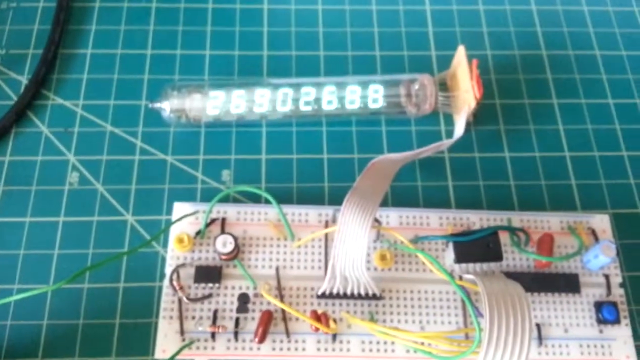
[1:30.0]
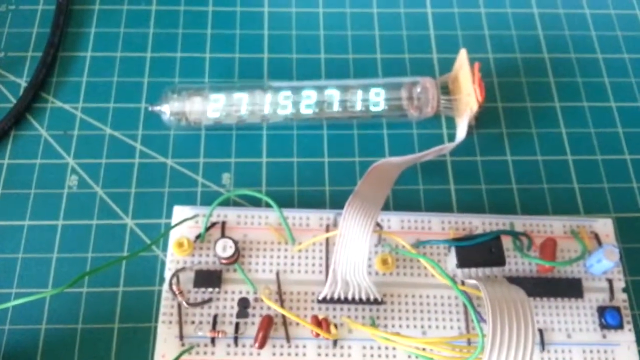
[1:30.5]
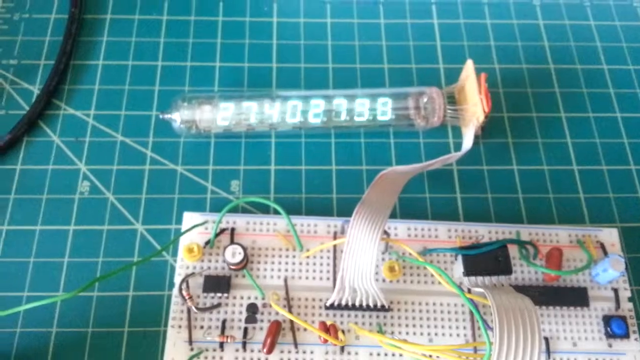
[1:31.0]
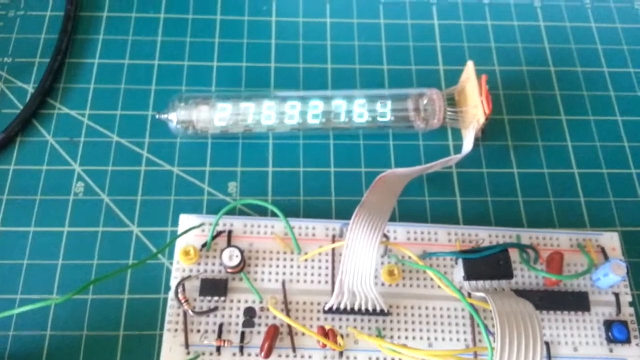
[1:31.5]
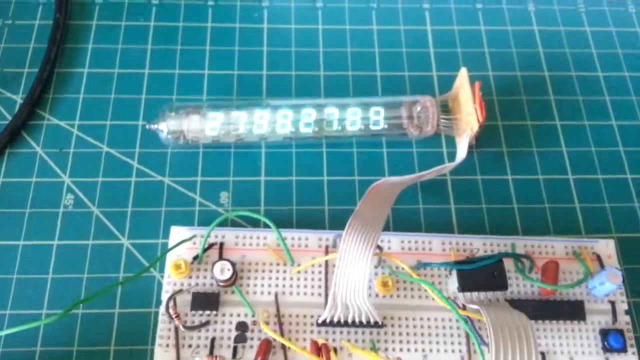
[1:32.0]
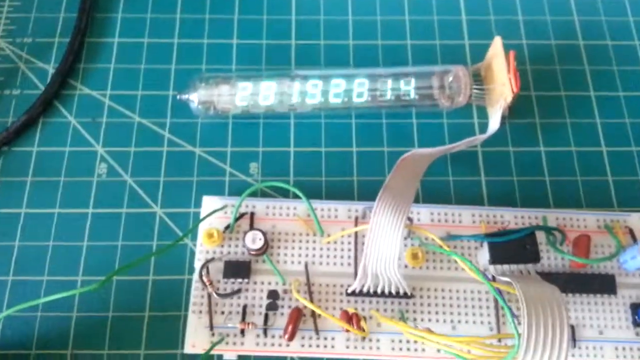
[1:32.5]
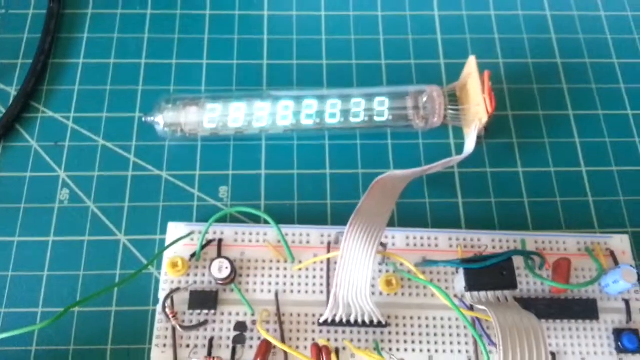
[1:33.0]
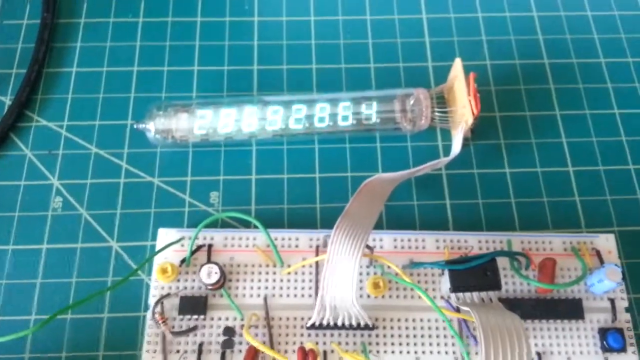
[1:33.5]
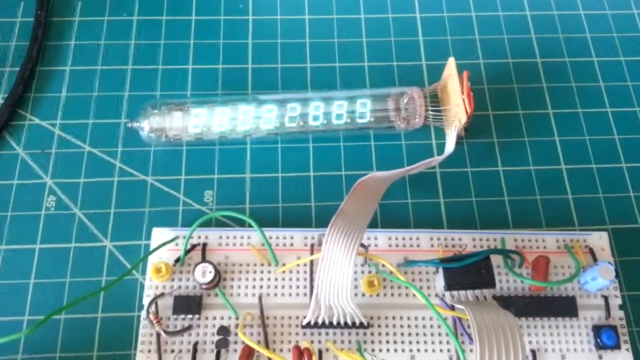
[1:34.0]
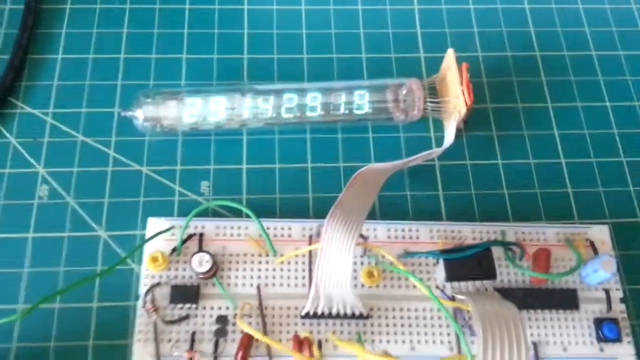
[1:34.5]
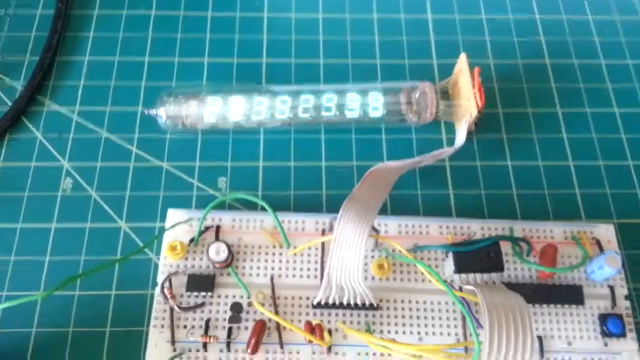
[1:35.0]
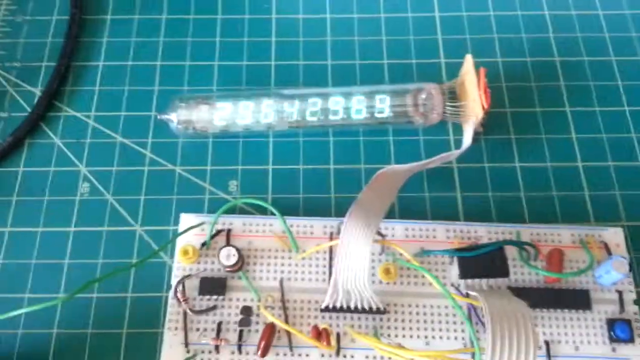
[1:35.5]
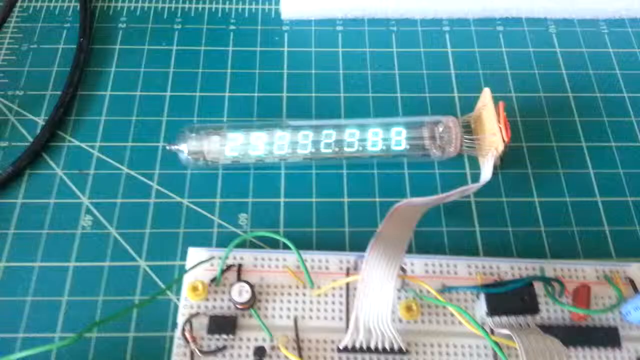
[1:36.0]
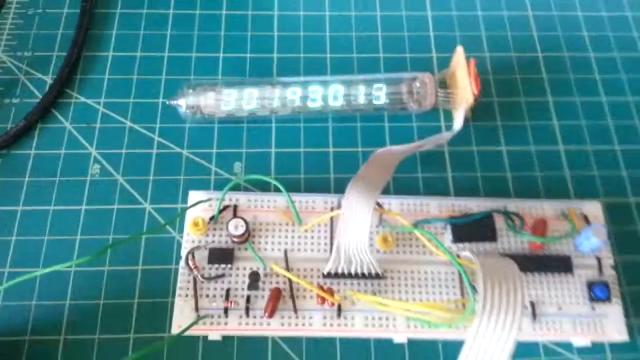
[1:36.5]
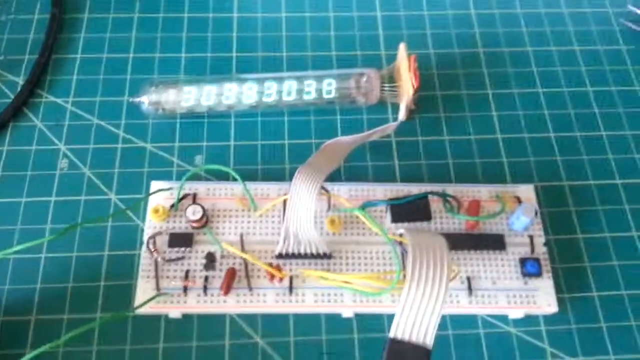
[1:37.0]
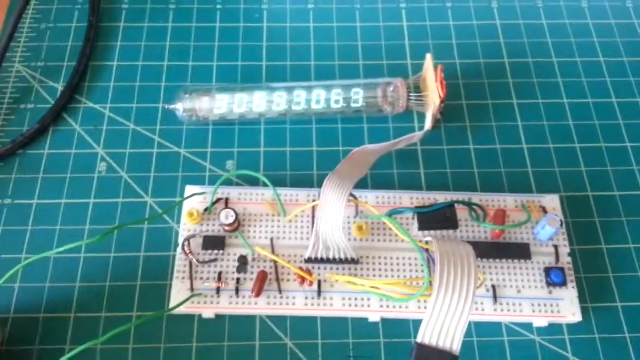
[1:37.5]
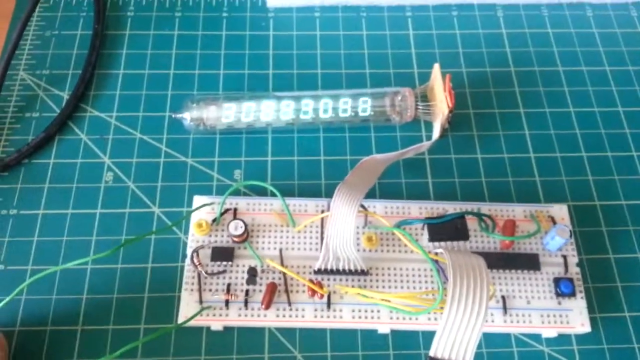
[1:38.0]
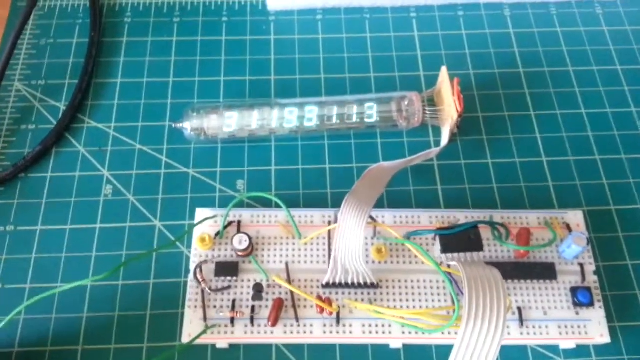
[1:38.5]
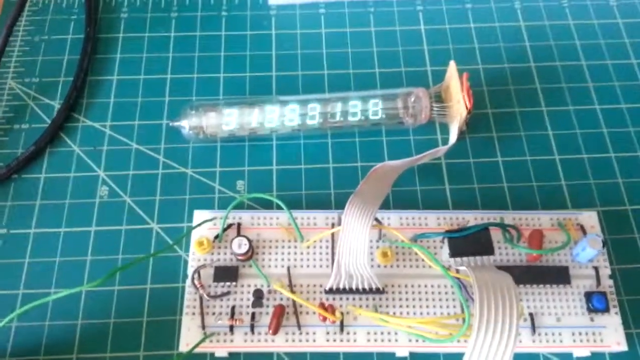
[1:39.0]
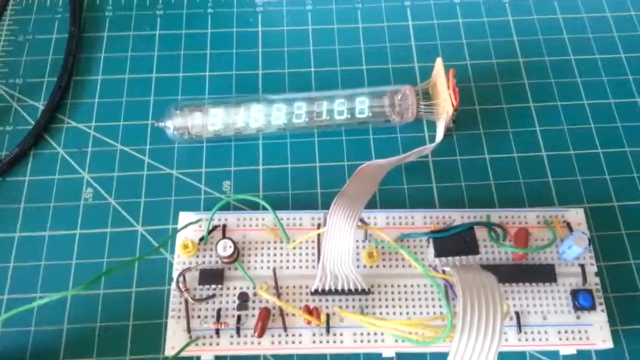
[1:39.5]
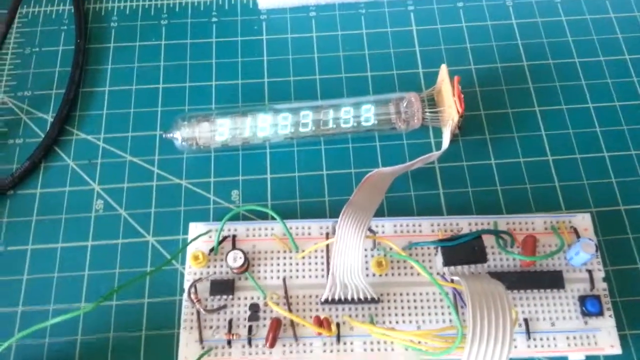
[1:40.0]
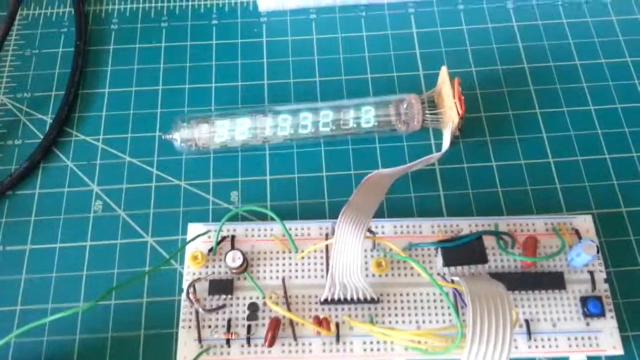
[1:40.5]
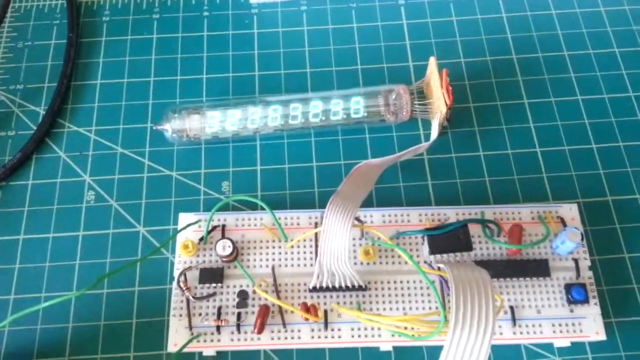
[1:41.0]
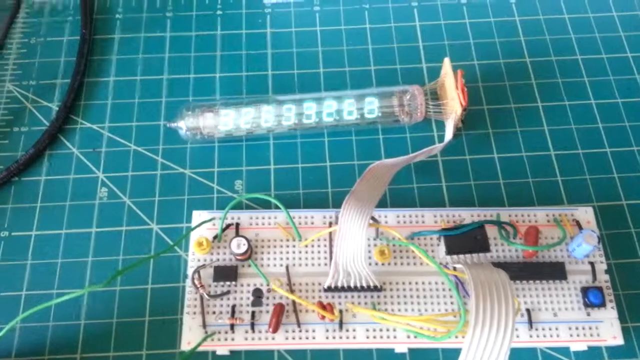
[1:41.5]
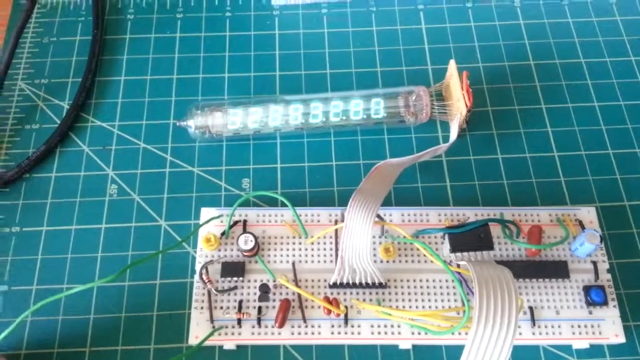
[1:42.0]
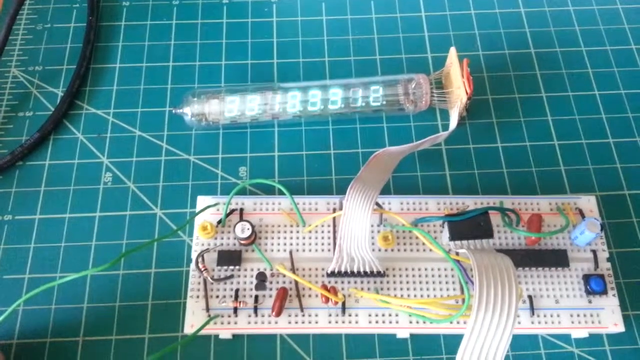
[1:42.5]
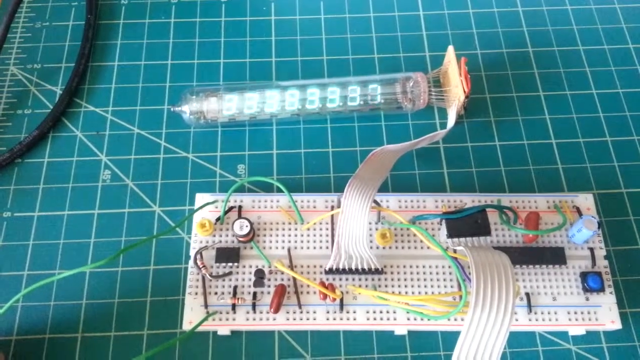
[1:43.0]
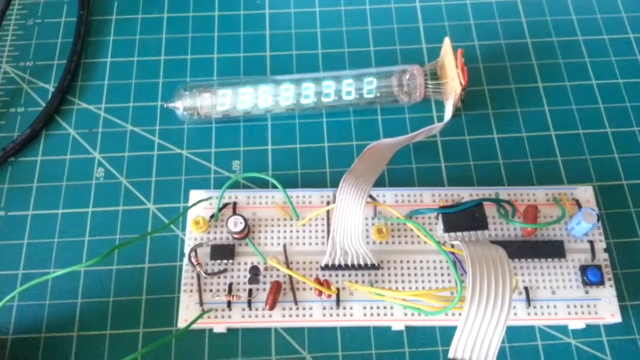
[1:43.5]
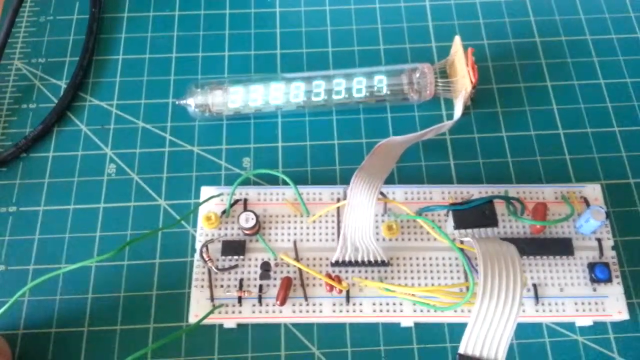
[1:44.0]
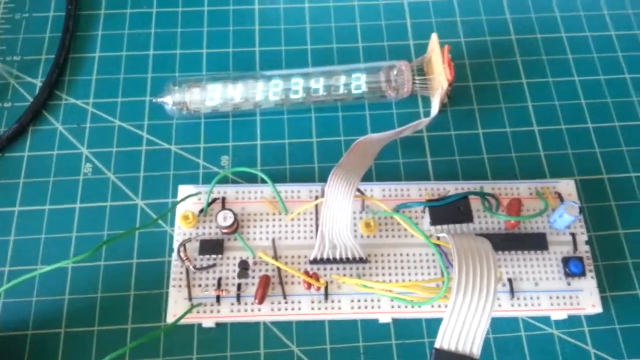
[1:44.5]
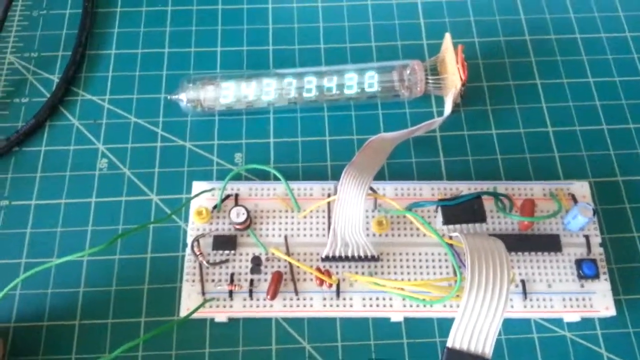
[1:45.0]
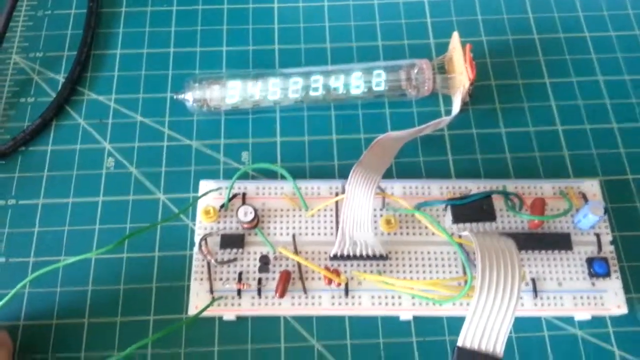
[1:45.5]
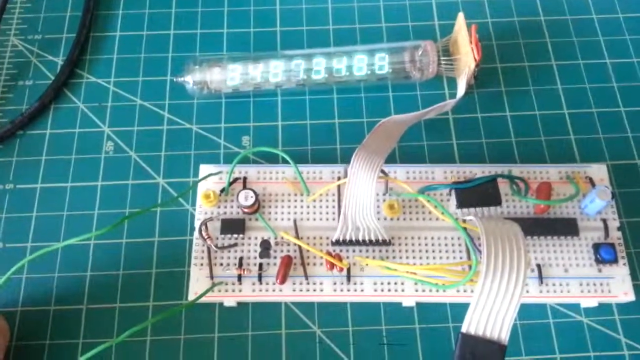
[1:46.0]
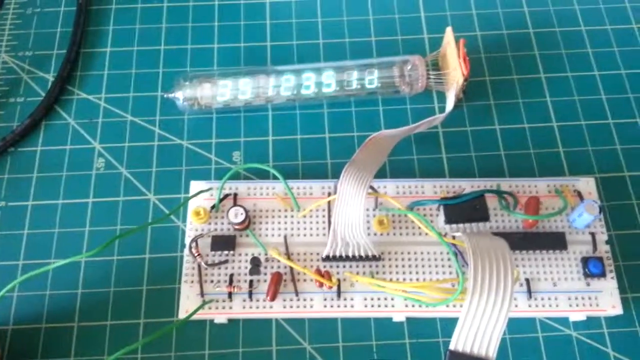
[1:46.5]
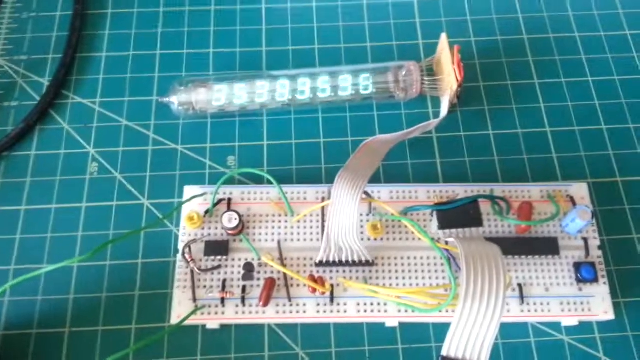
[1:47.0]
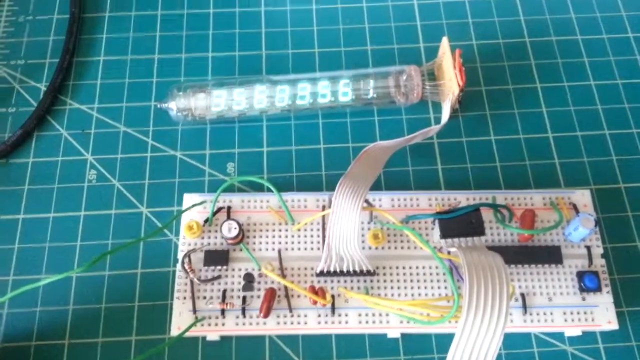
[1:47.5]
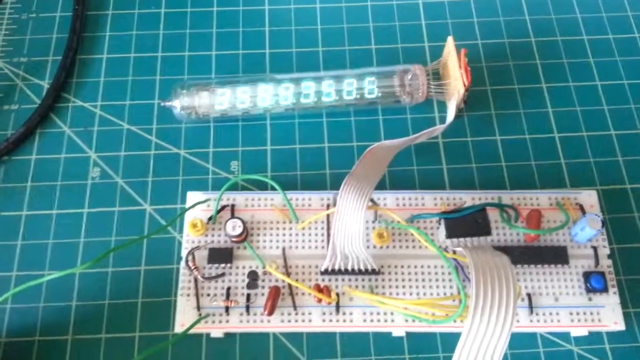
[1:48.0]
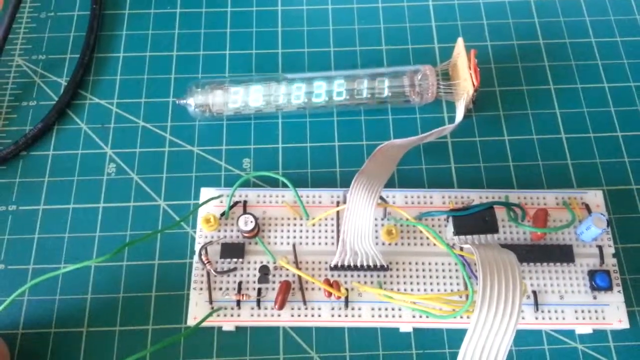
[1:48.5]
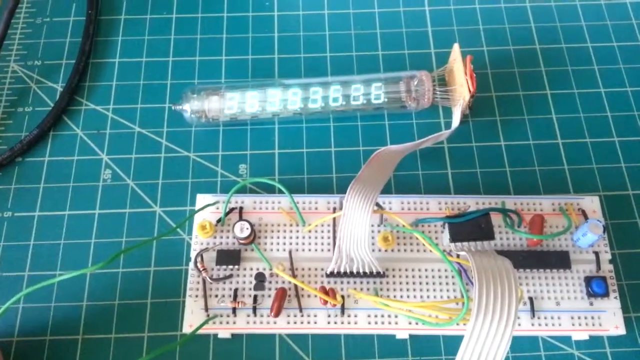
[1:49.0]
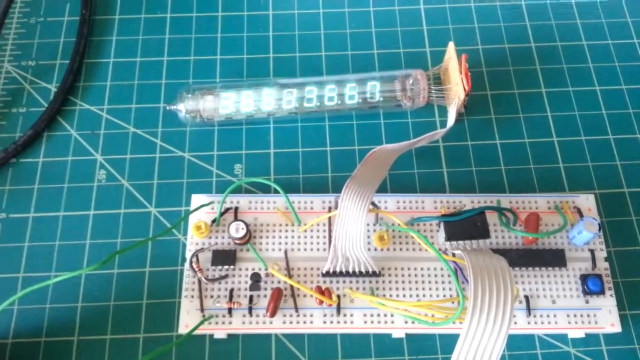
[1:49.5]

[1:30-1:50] Nothing new is shown; the number on the glass tube continues to grow, with no apparent limit.